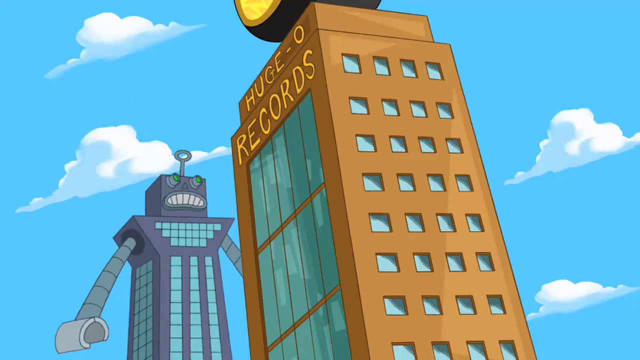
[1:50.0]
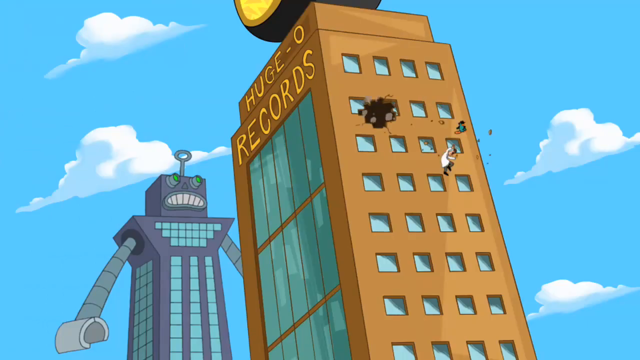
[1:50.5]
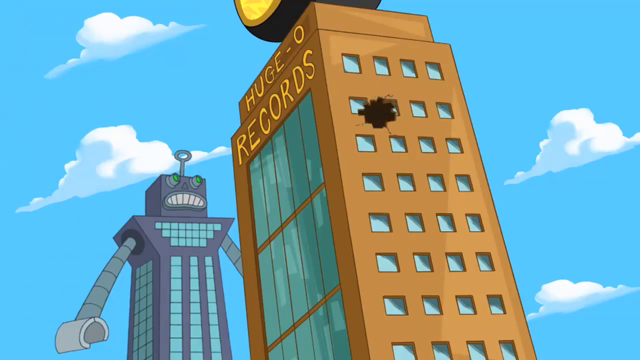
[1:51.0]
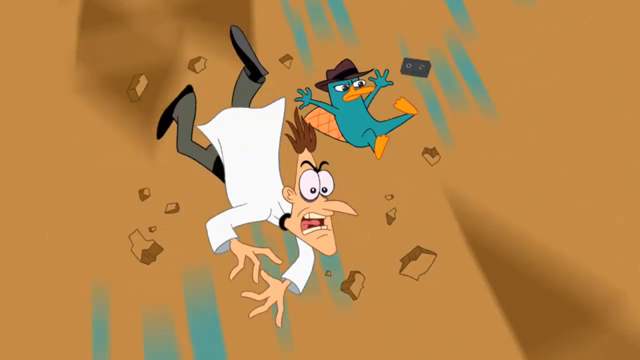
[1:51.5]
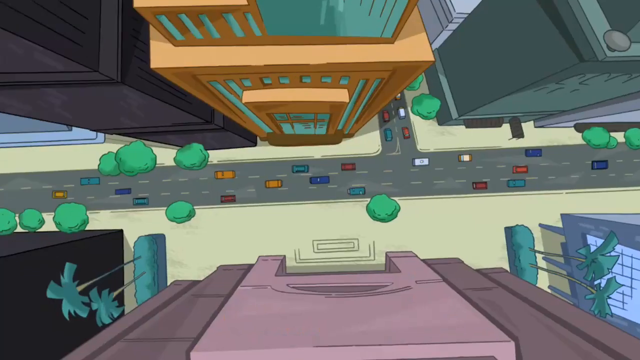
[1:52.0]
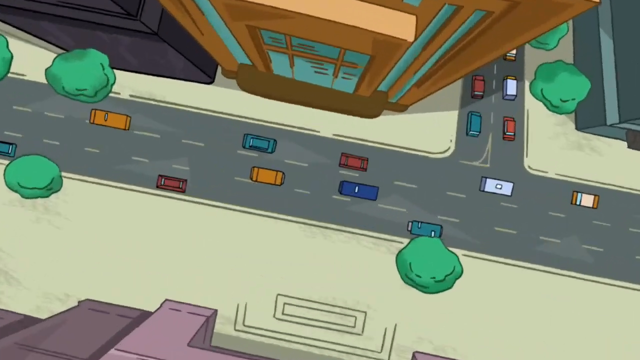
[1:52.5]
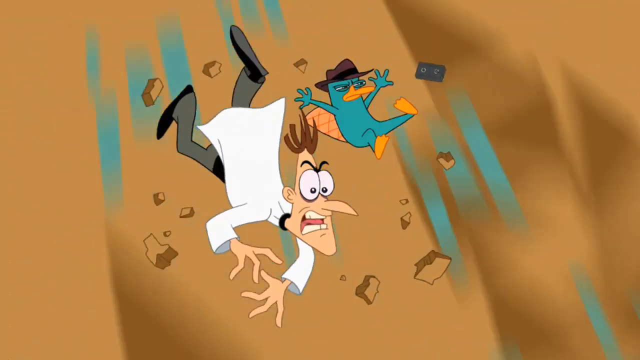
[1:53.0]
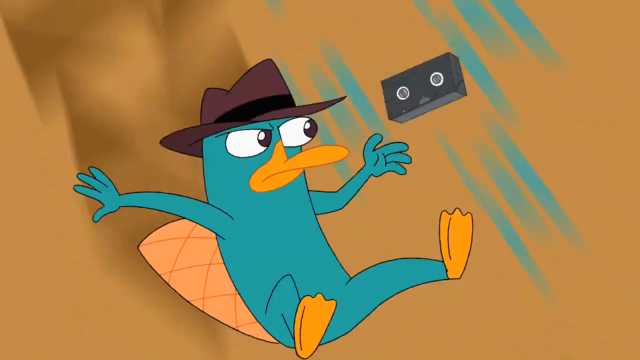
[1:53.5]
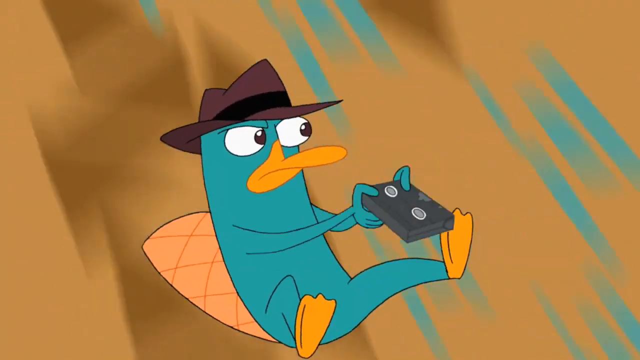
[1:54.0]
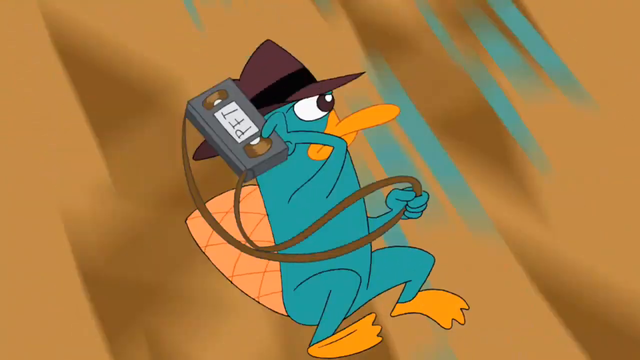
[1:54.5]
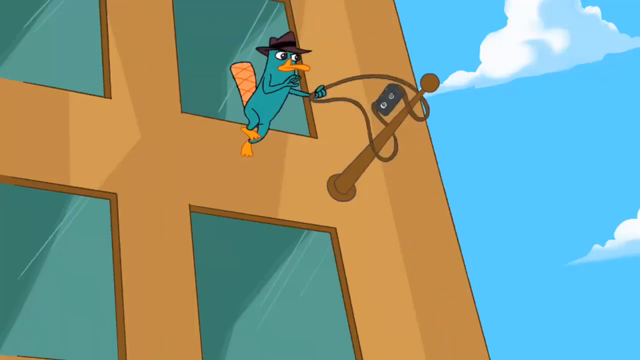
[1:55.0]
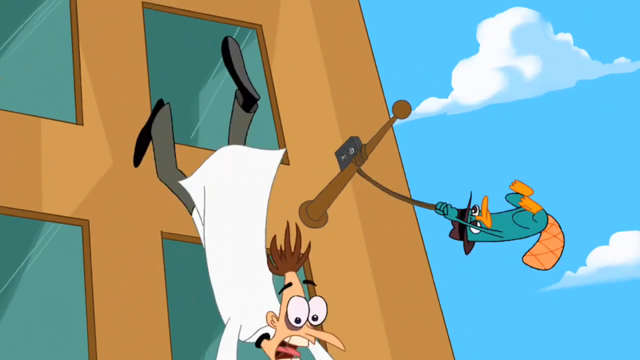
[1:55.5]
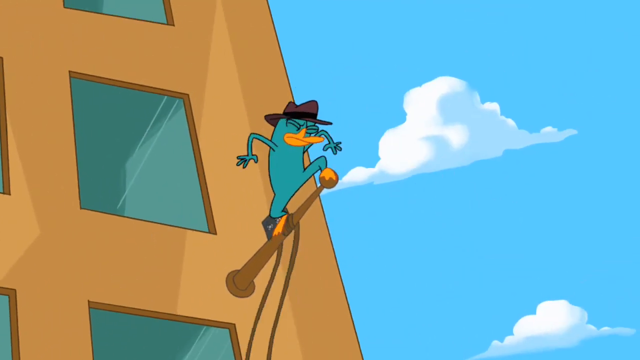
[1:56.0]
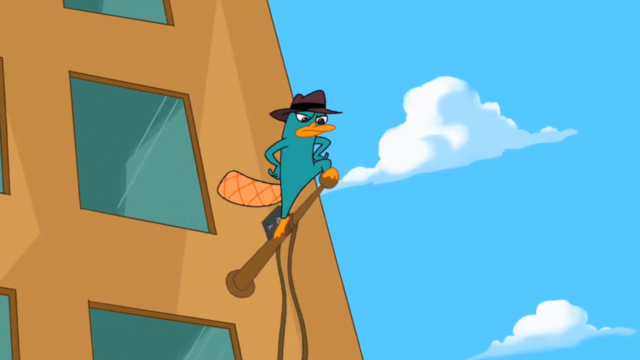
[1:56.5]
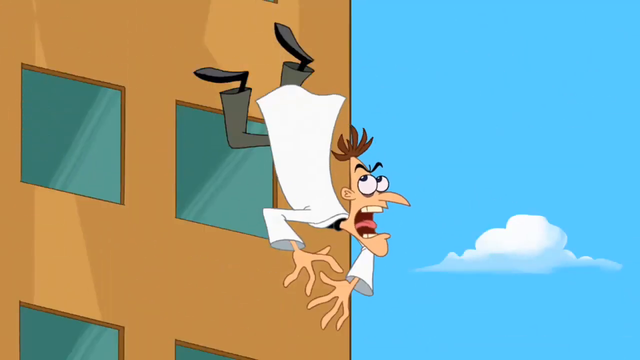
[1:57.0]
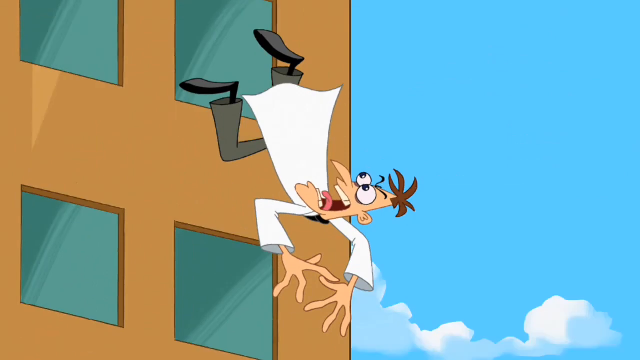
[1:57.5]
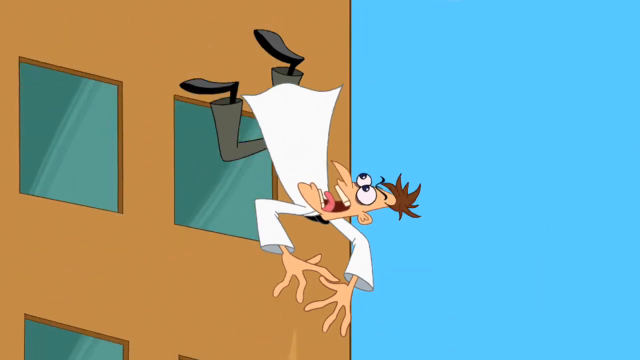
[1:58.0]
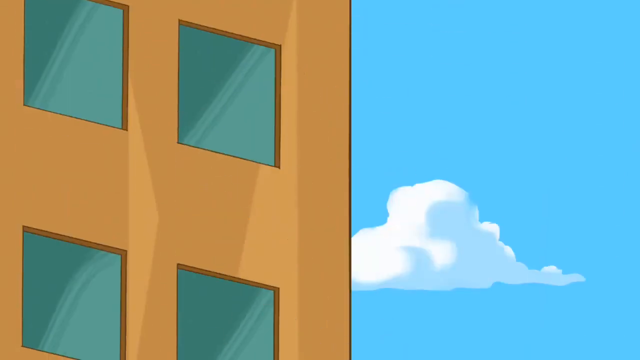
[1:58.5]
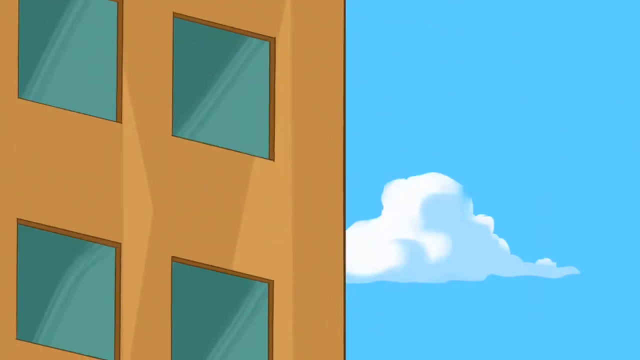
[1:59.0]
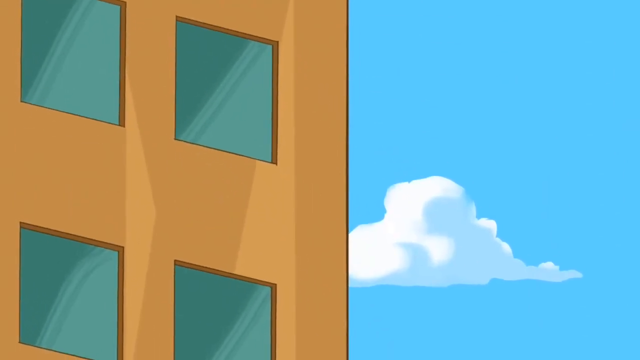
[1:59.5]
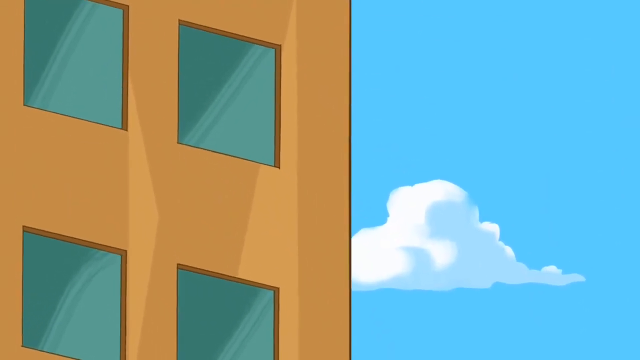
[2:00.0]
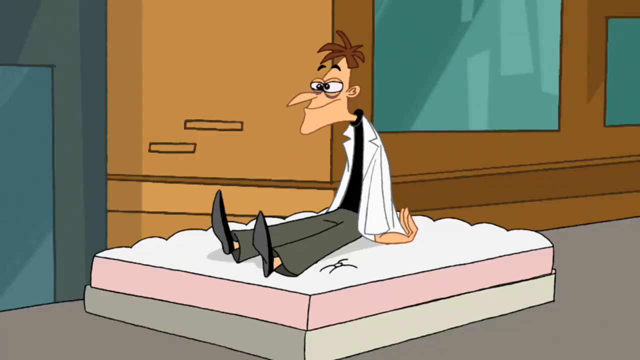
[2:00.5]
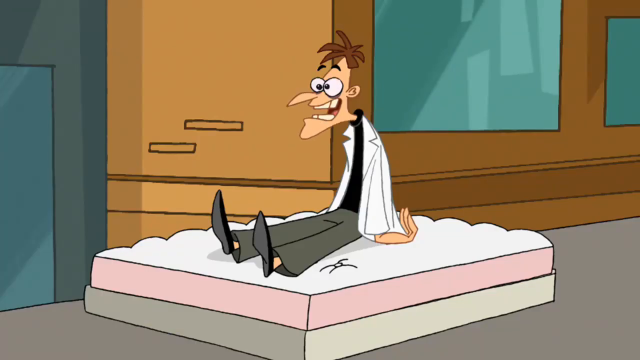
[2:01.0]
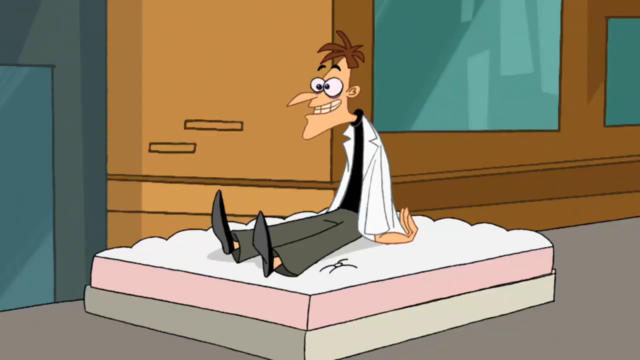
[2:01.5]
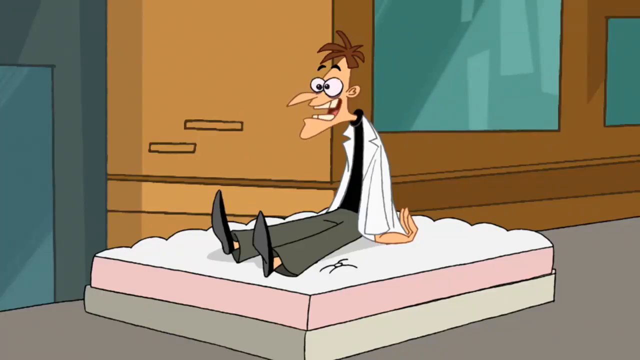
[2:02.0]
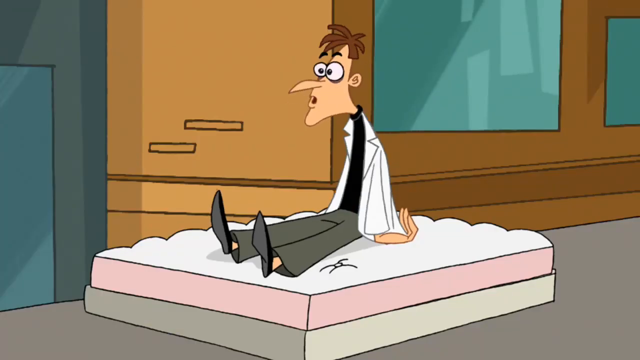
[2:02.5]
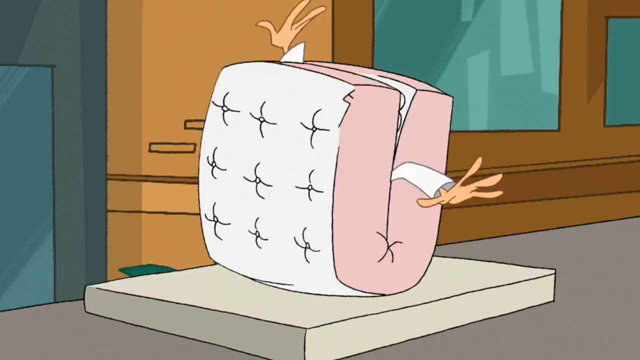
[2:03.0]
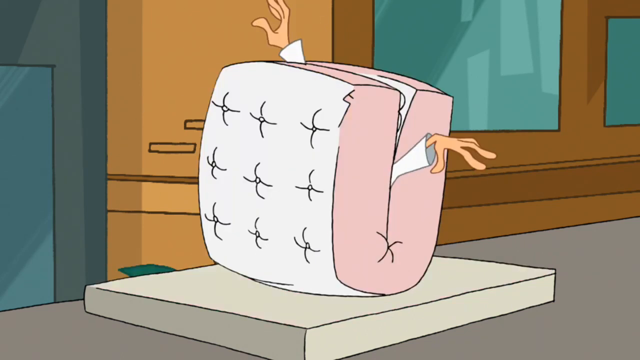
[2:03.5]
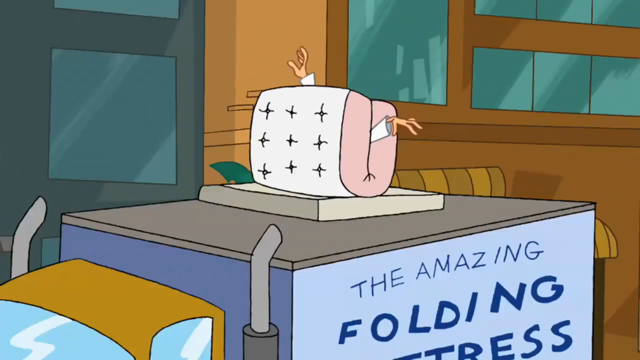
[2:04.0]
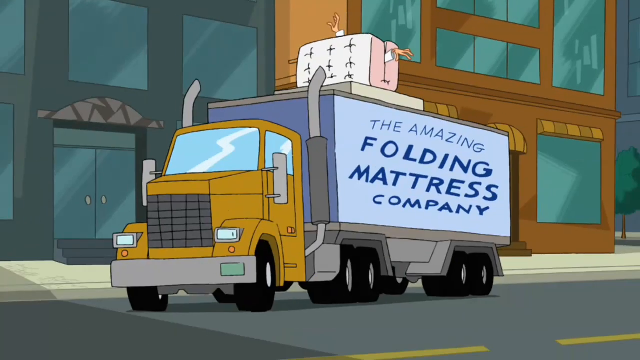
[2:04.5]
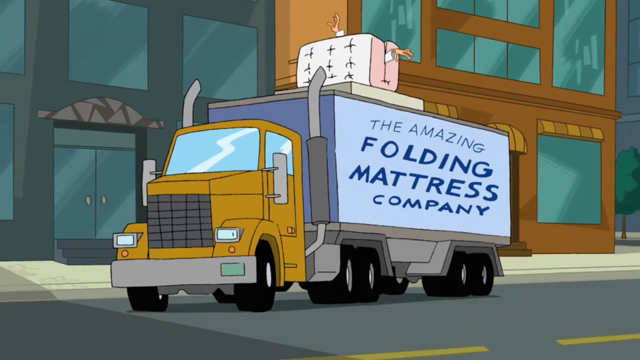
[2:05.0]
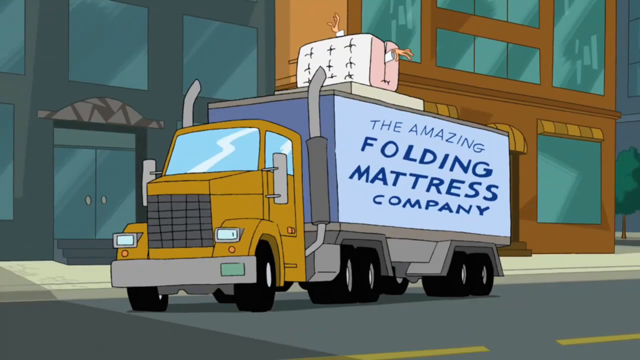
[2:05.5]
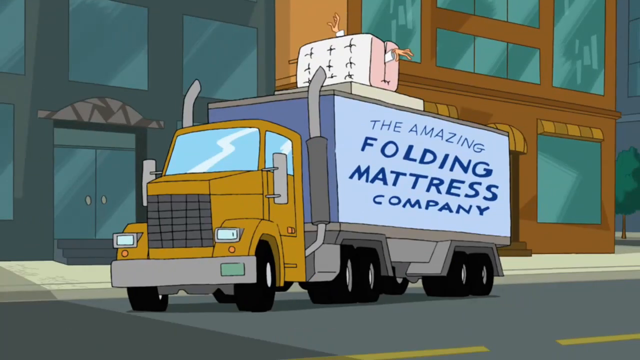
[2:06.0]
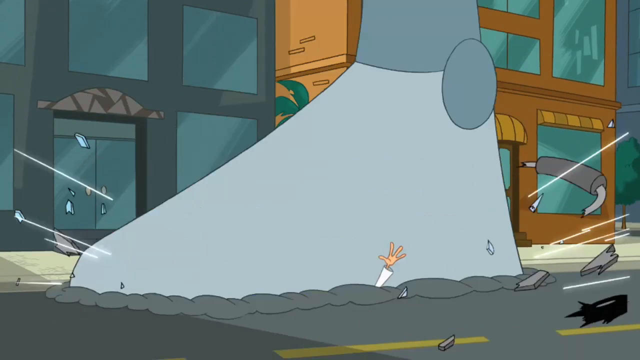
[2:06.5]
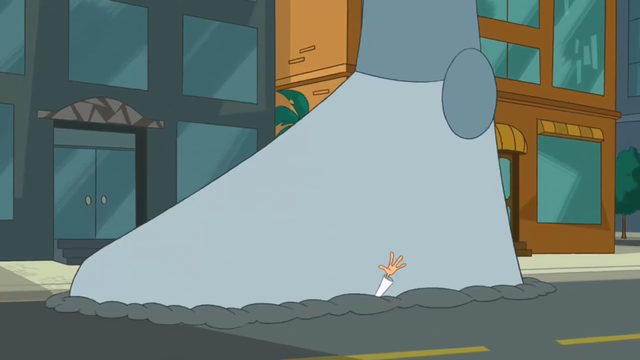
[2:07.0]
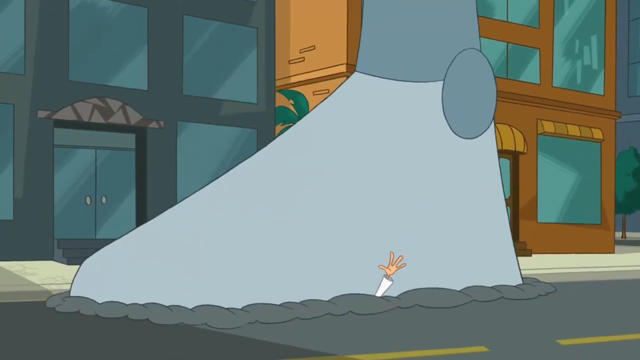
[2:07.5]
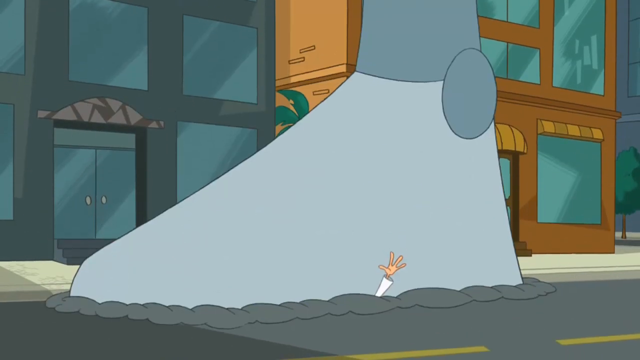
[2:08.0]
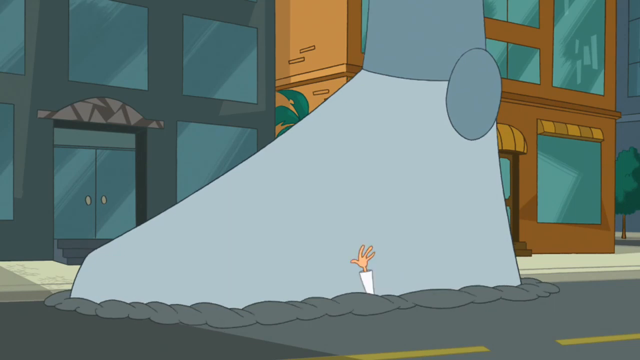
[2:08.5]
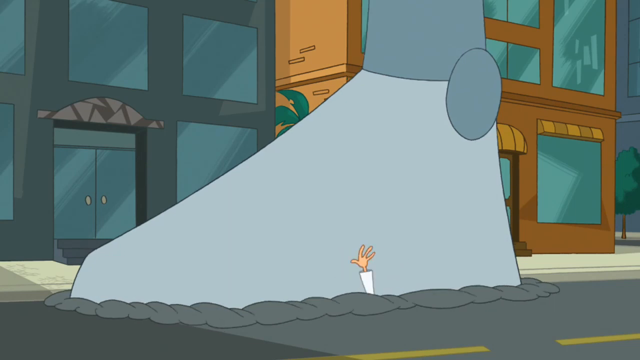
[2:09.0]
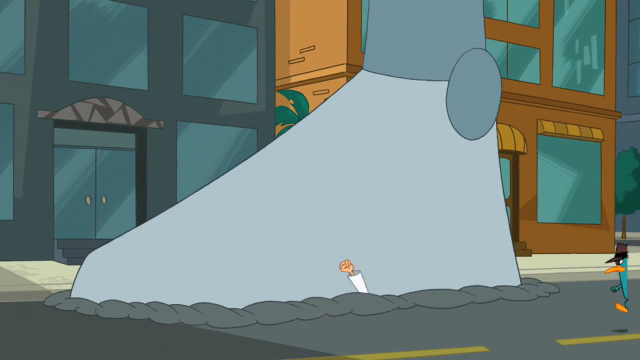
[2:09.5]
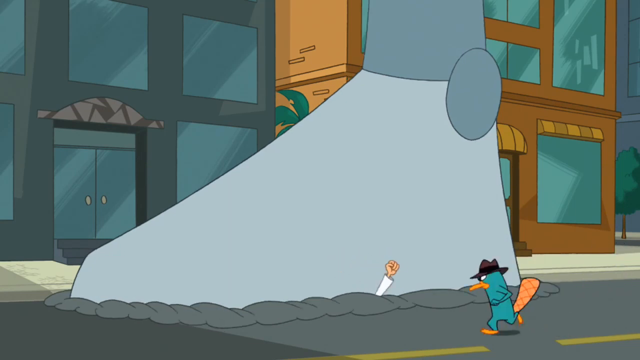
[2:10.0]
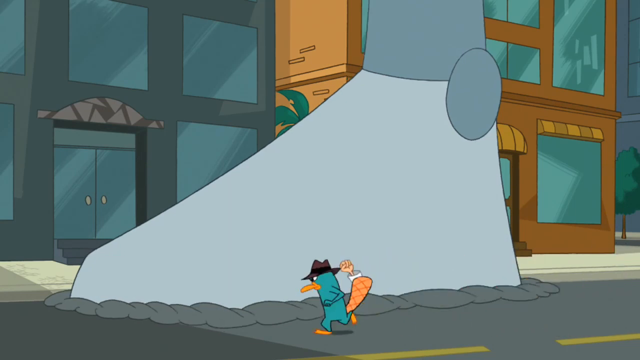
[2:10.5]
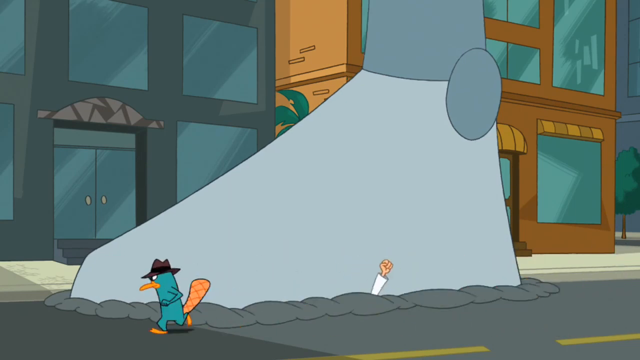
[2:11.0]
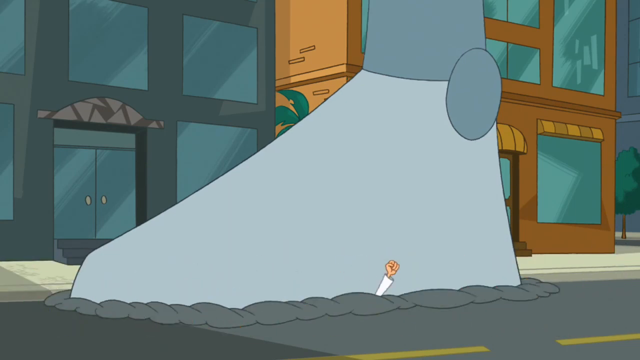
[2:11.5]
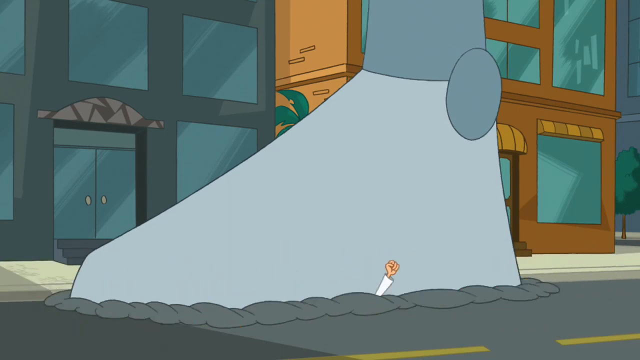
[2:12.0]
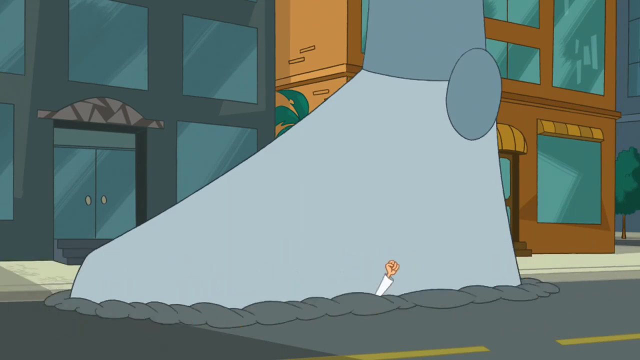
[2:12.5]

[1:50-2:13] The hero and the evil doctor are still flying through the air. The hero does a Batman-like trick to stop himself from falling, hooking what looks like a boomerang around a flagstaff on a building in the city, and saves himself. The evil doctor plummets unrealistically to the ground, hits it and survives. The giant robot is still walking around and functioning. The hero is on the ground with the doctor, and it looks like the hero, who may be some type of law enforcement officer, may be ready to apprehend him.